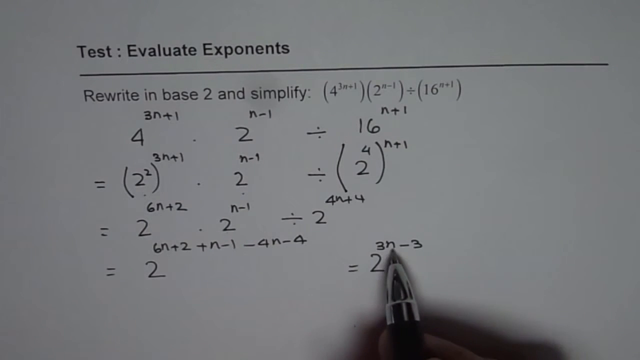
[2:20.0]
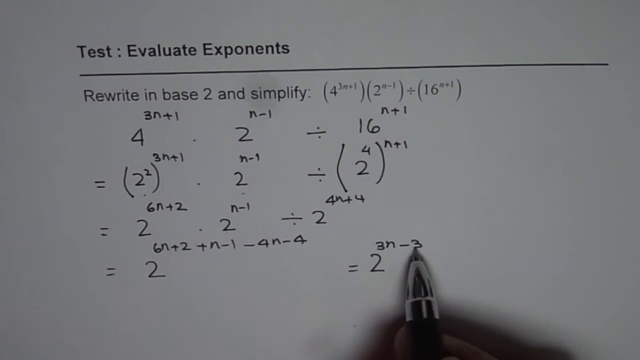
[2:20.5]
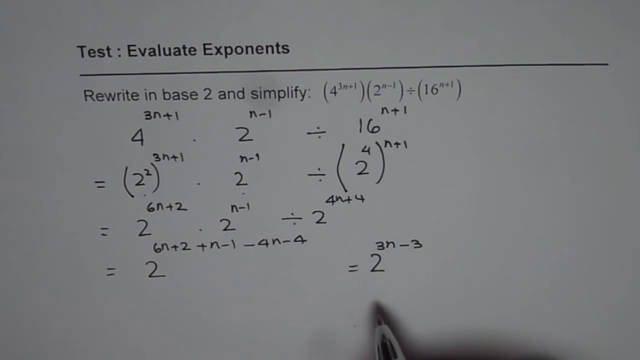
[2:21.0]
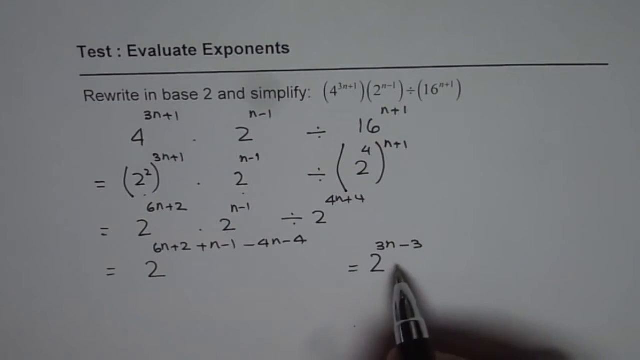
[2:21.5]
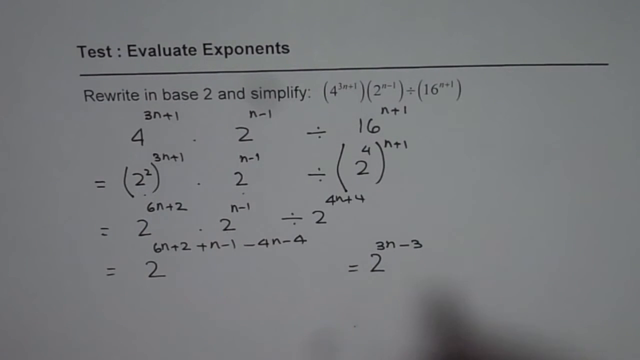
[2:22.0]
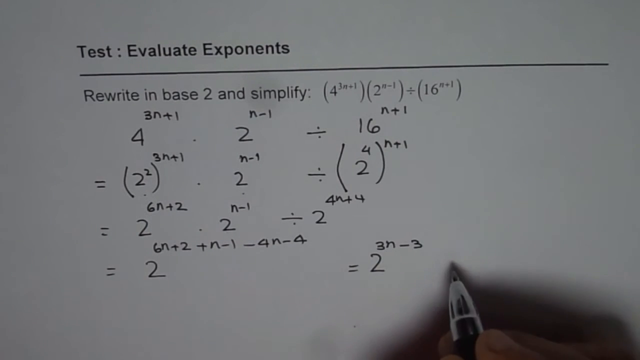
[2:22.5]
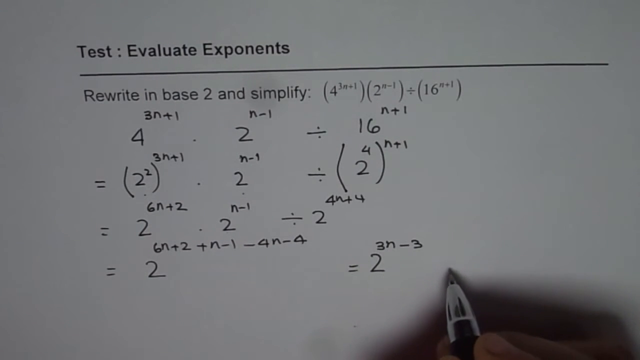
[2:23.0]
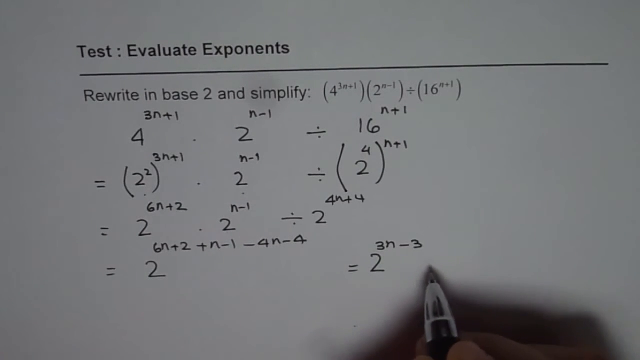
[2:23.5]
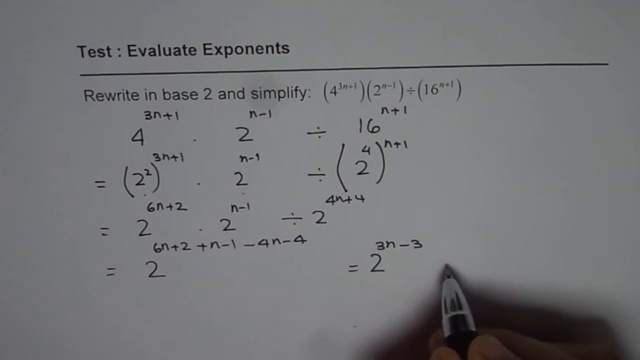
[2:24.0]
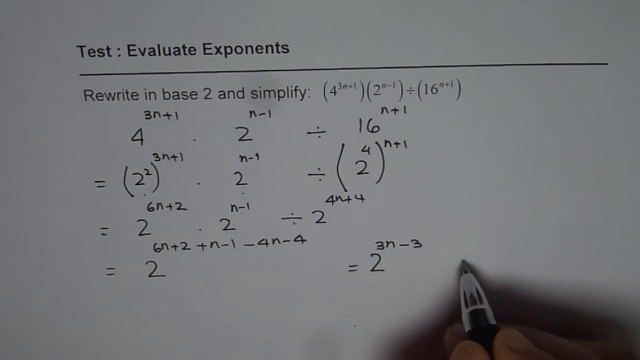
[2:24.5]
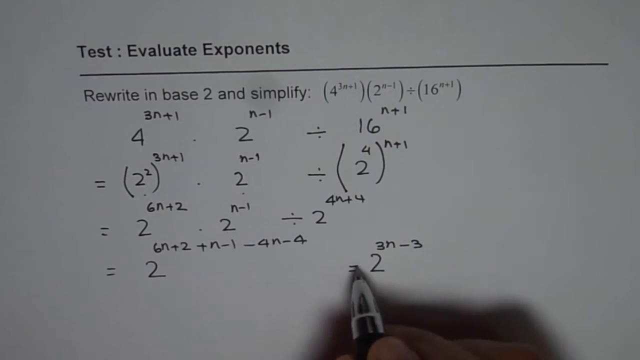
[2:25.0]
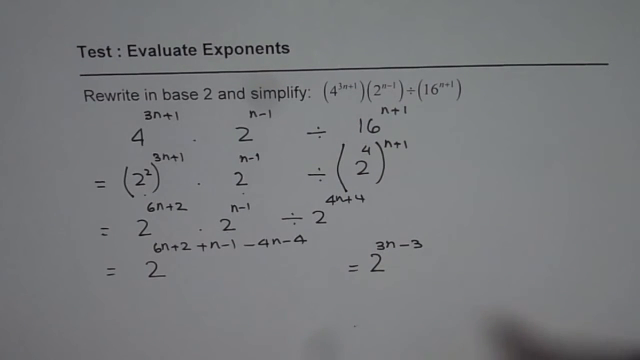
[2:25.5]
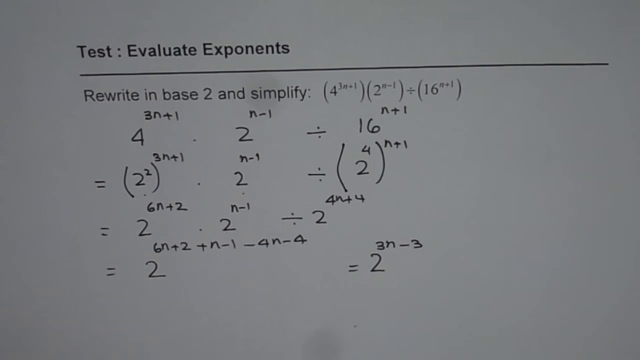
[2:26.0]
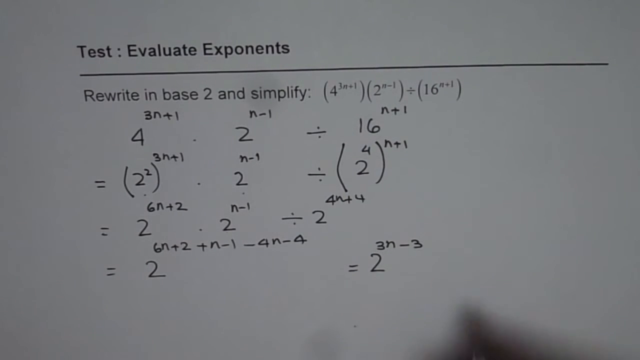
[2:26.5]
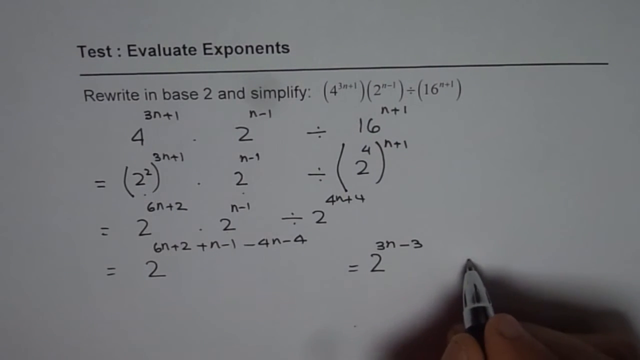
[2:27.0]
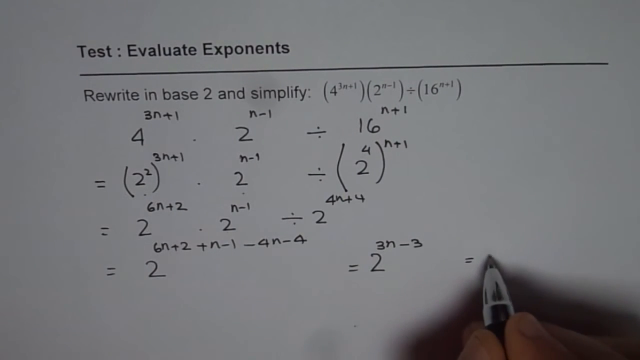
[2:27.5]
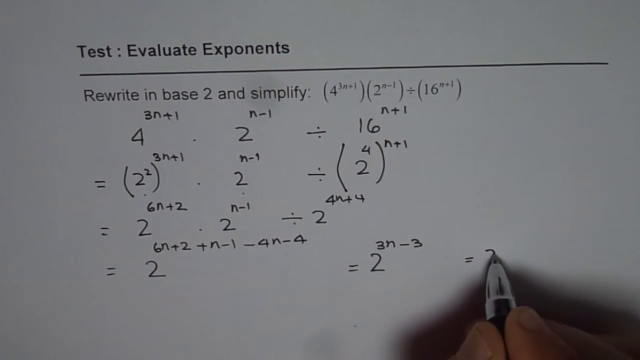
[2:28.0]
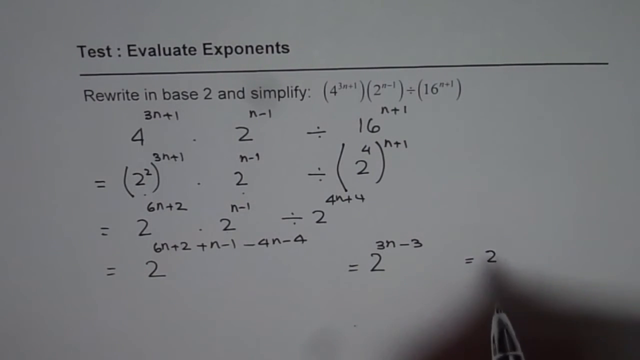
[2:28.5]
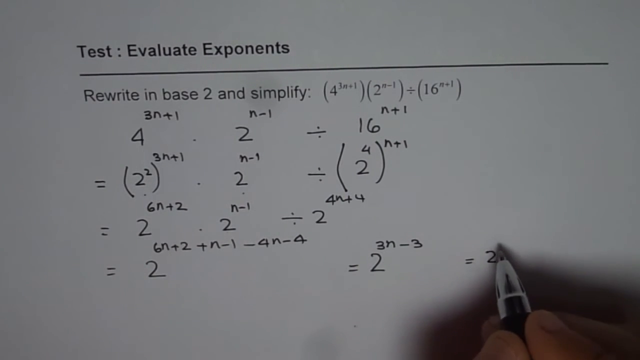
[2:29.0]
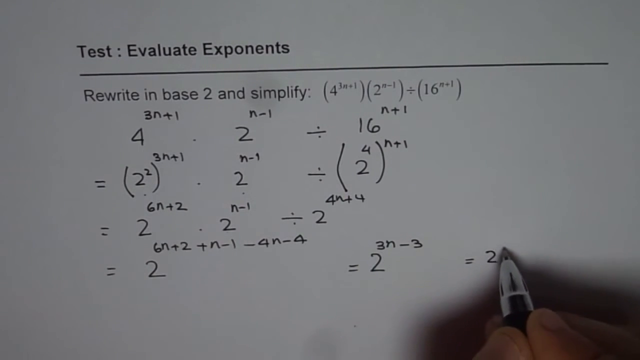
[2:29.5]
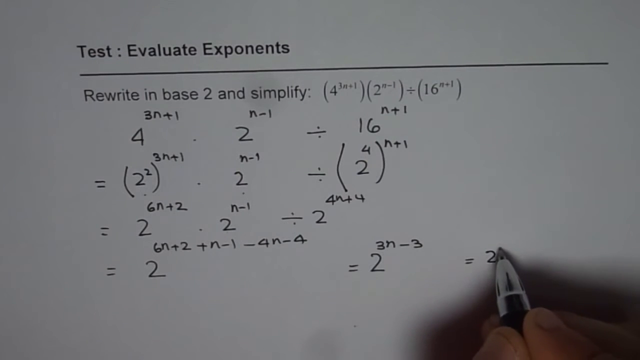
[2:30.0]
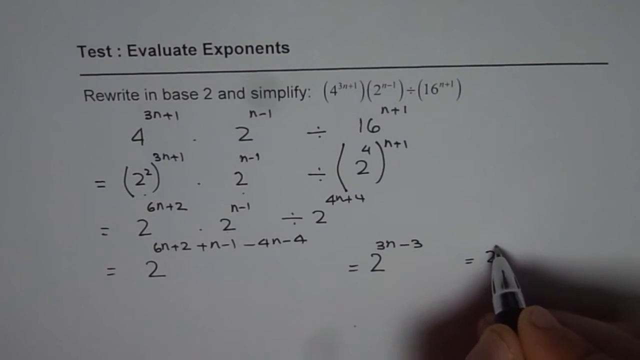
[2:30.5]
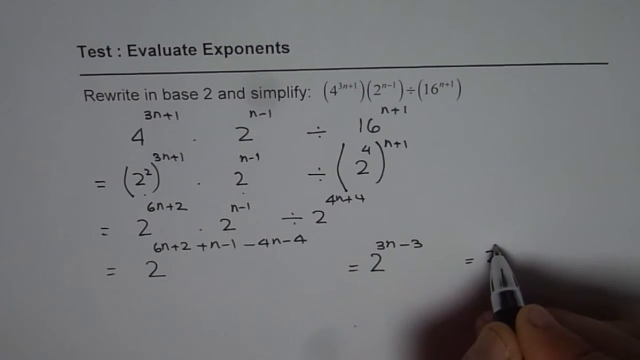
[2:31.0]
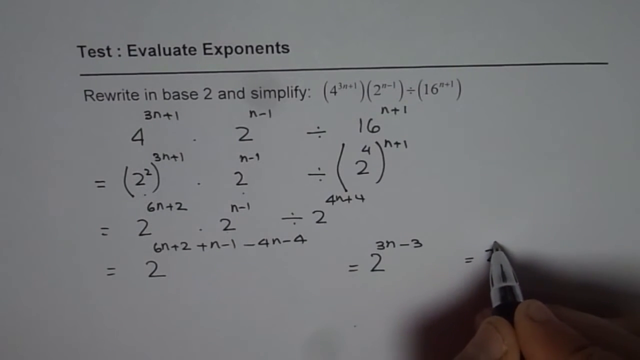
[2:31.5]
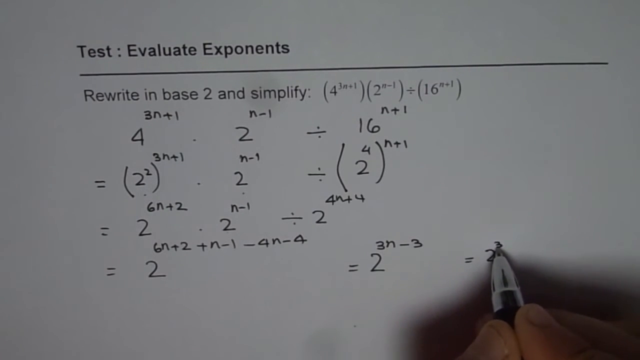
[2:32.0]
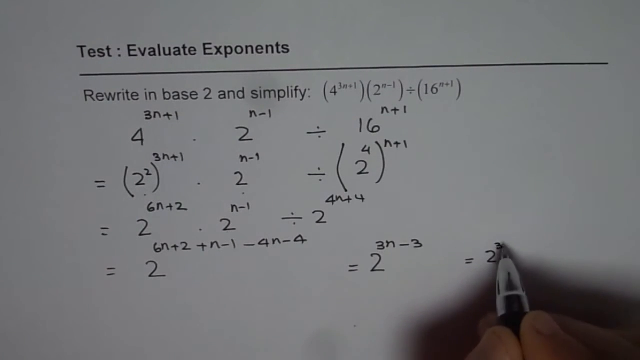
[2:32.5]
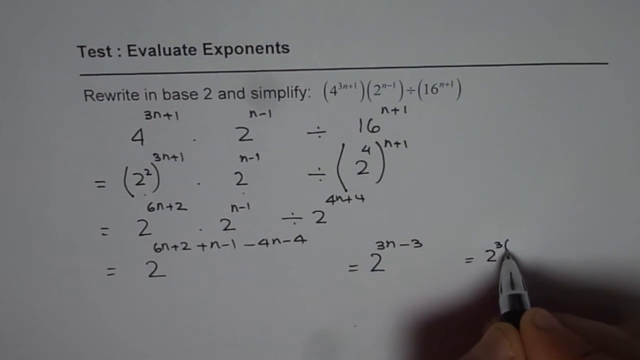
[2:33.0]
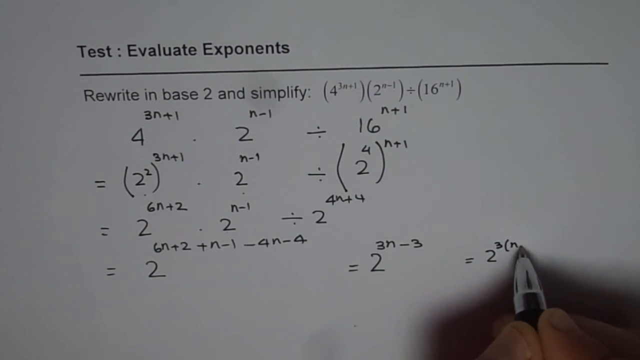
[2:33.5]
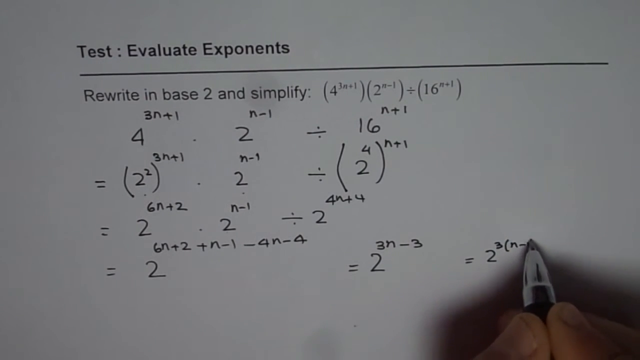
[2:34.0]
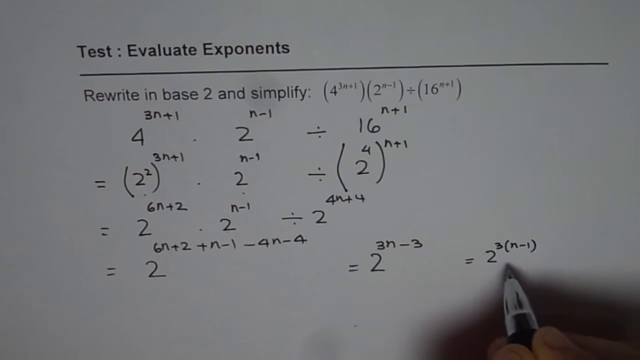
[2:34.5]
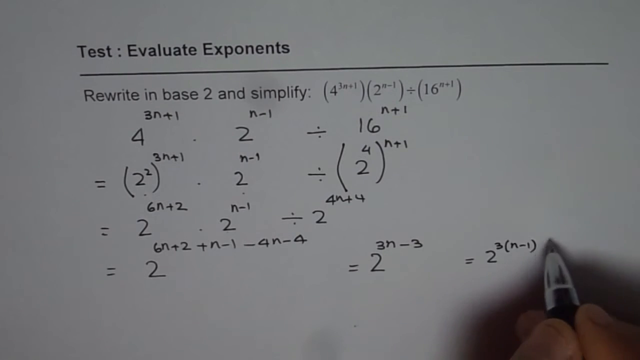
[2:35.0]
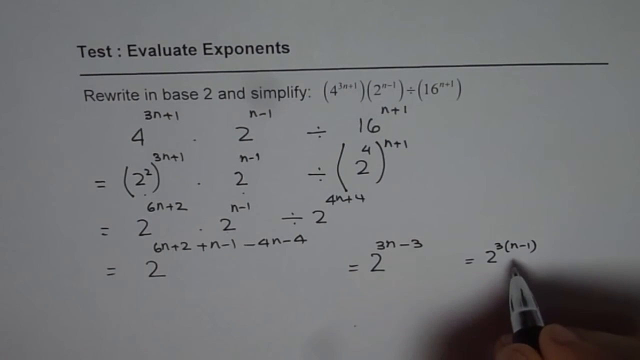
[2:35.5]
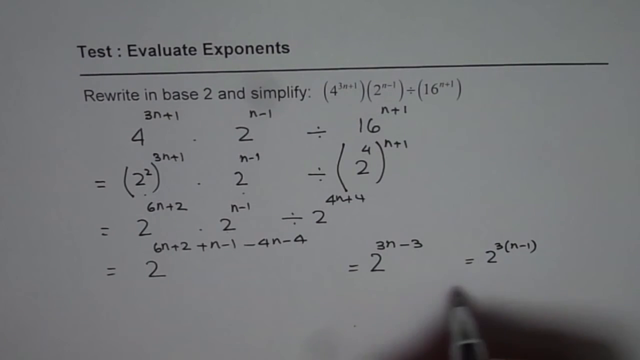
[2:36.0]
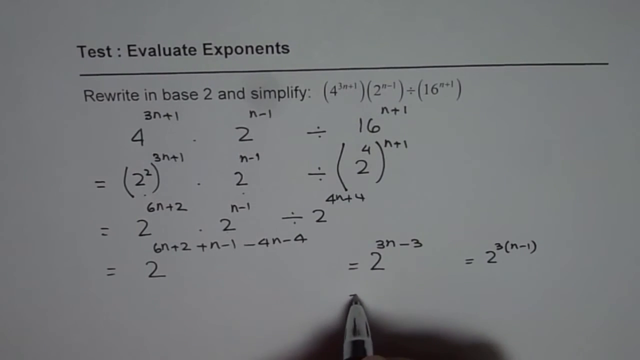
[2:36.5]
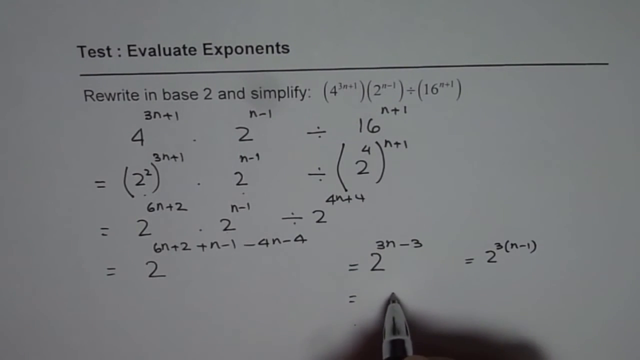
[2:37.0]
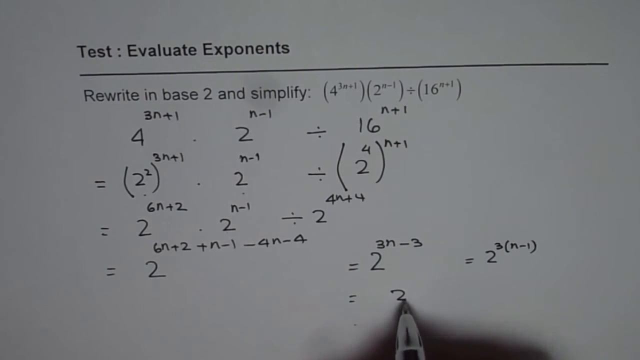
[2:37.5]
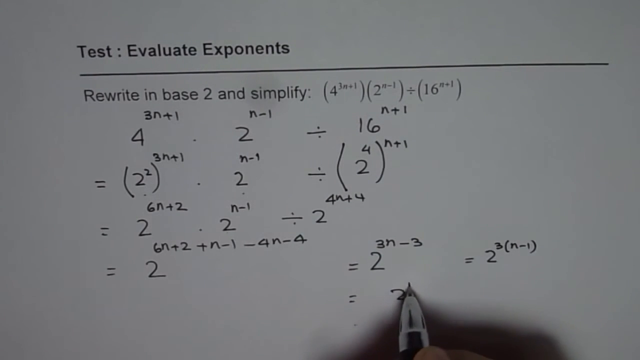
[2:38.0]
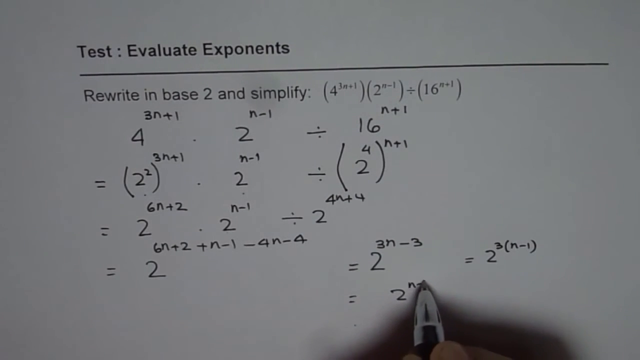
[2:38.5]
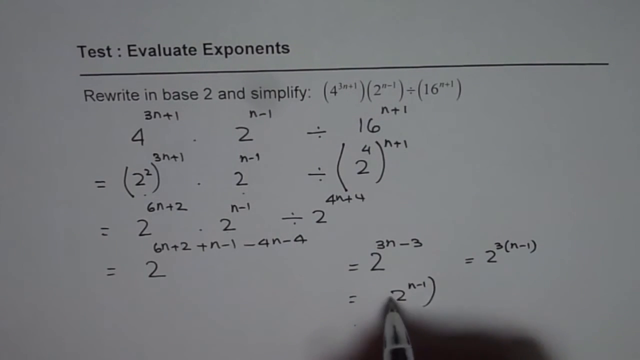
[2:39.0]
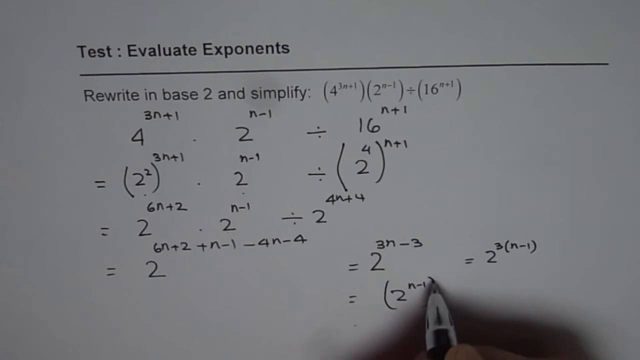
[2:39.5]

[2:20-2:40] A white piece of paper says "test evaluate exponents," with a black line underneath going across the paper, and below it "rewrite in base two and simplify," with a formula to the right. Underneath, the person has written down four lines trying to simplify the equation. At the bottom of the screen, a person holds a black pen with a silver tip in their right hand. They seem to be pointing at the fourth line, which has the number 2 with the exponent 3n − 3. To the right of that, they seem to point with the pen and write "= 2," putting a 3 and then parentheses containing n − 1 in the exponent. They then write an equals sign on a fifth line, followed by the number 2 with an exponent of n − 1 in parentheses, and write the number 3 on top of the parentheses on the right side.